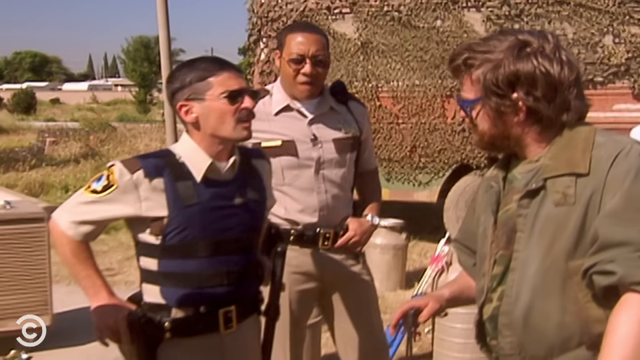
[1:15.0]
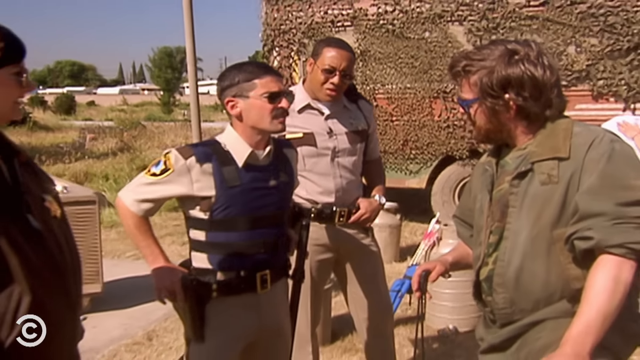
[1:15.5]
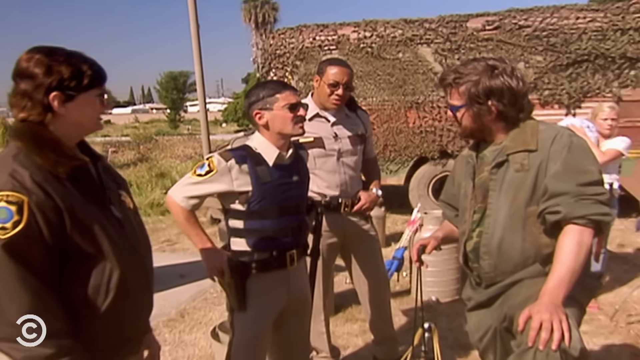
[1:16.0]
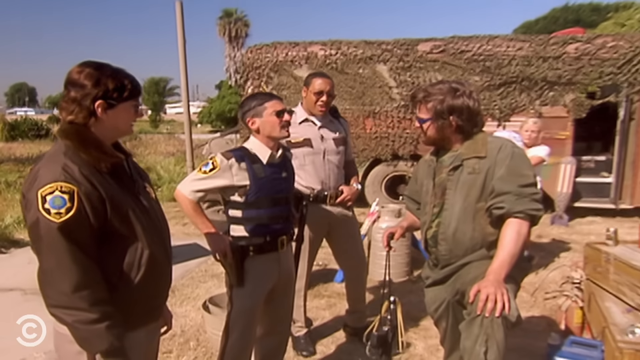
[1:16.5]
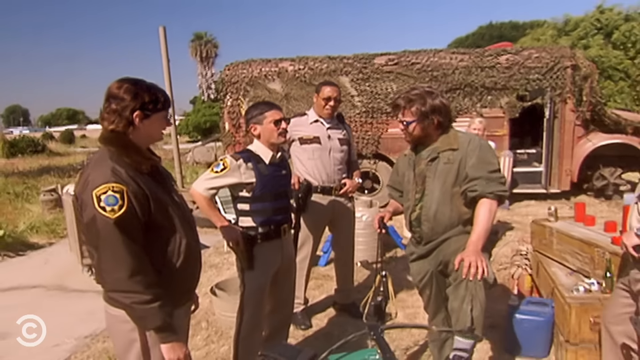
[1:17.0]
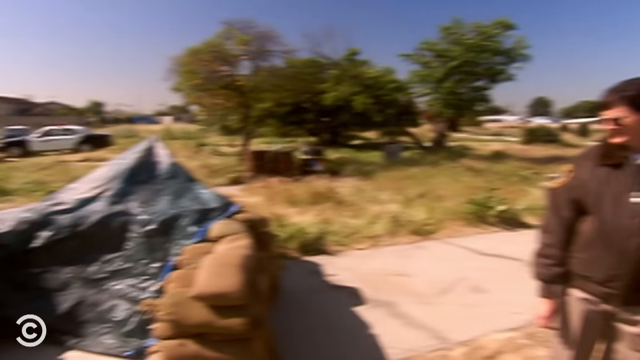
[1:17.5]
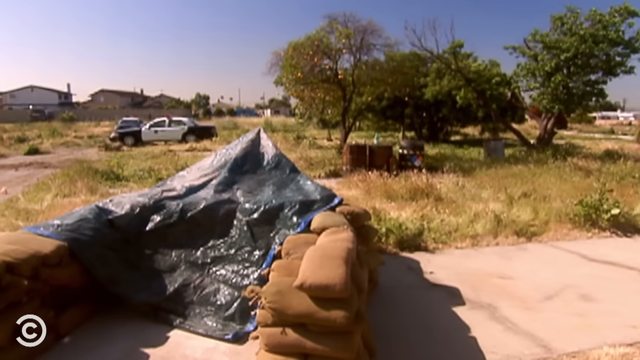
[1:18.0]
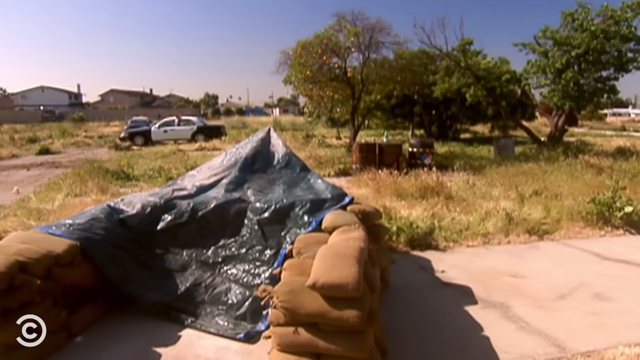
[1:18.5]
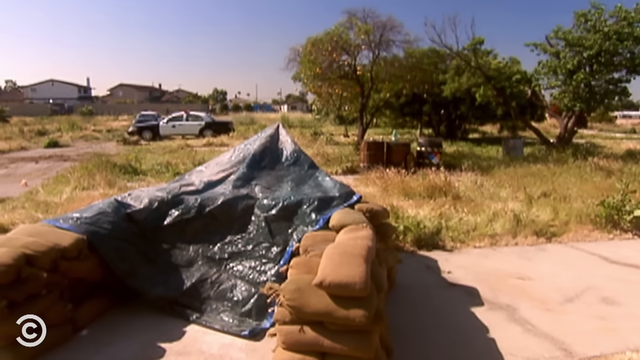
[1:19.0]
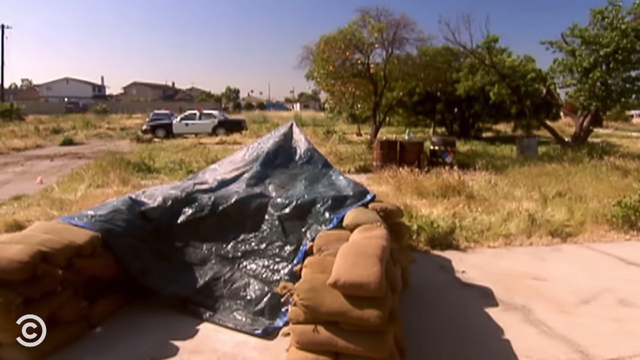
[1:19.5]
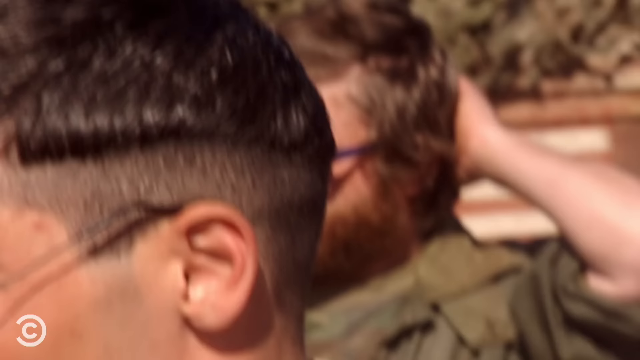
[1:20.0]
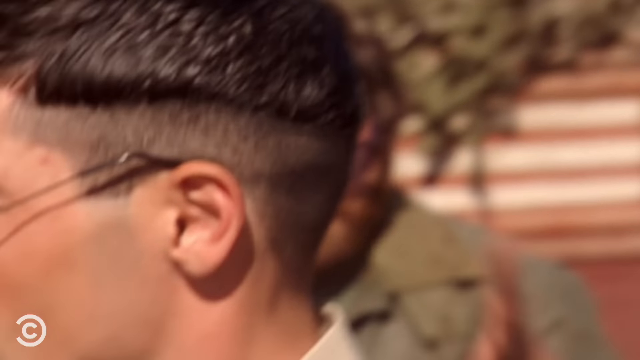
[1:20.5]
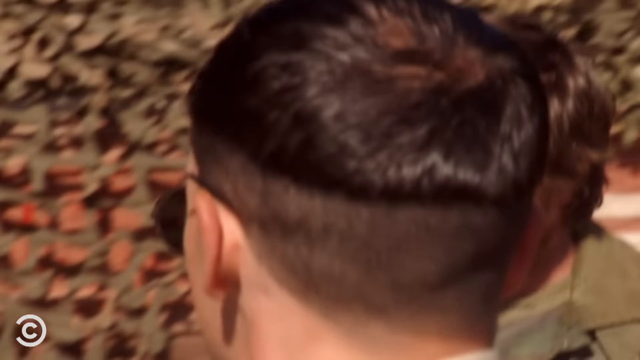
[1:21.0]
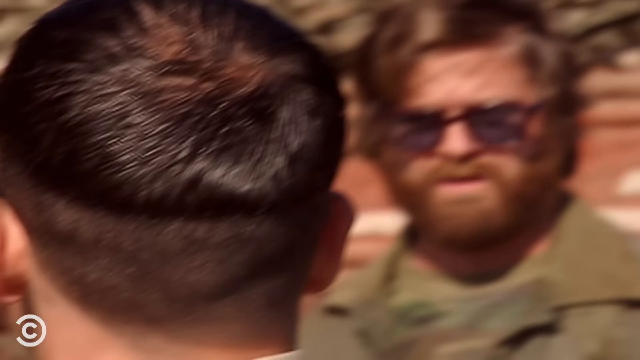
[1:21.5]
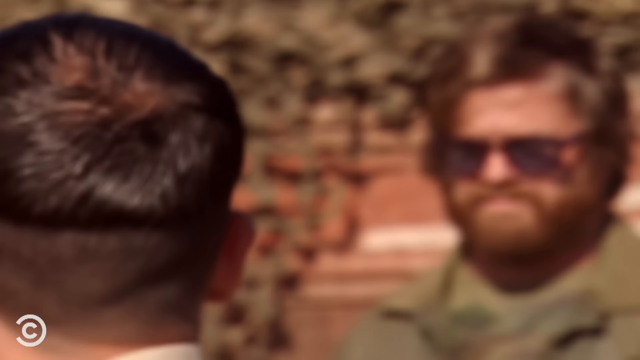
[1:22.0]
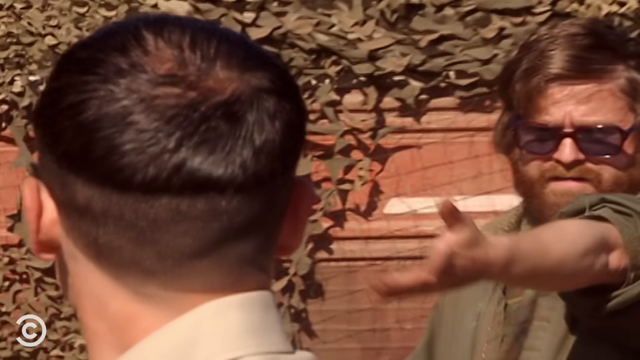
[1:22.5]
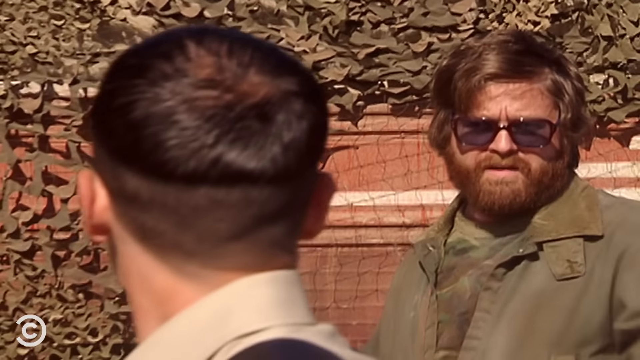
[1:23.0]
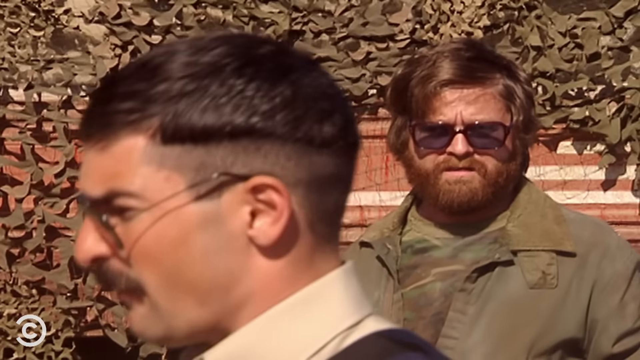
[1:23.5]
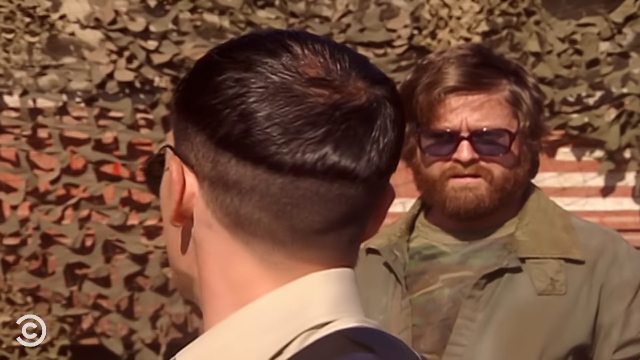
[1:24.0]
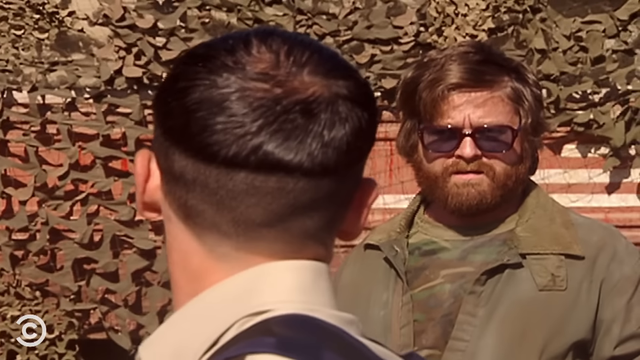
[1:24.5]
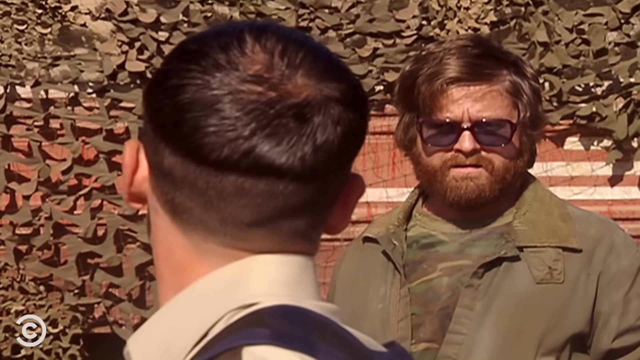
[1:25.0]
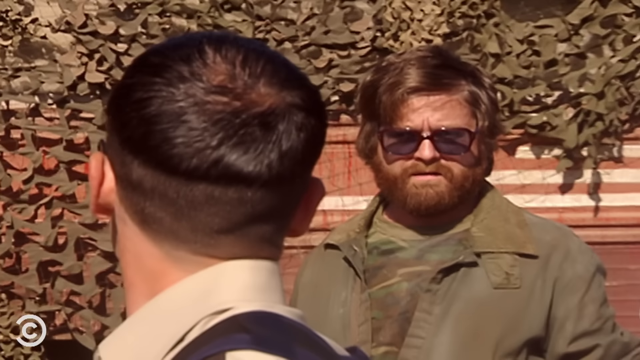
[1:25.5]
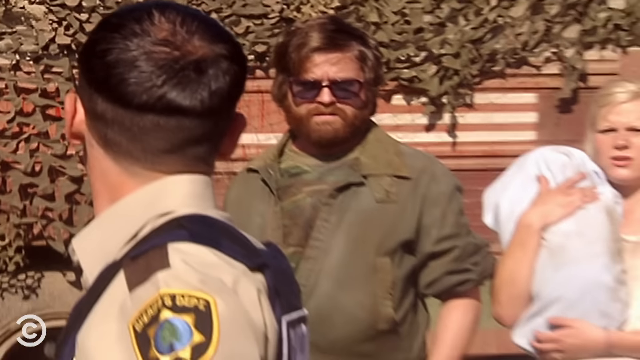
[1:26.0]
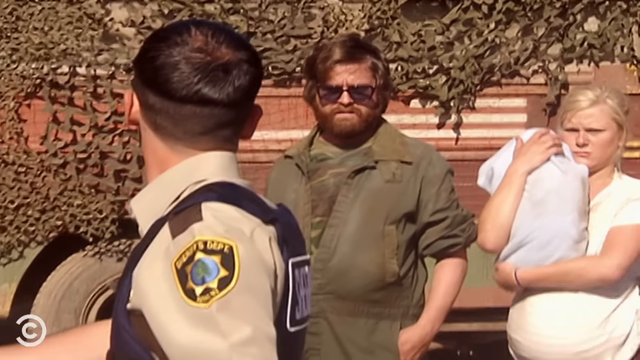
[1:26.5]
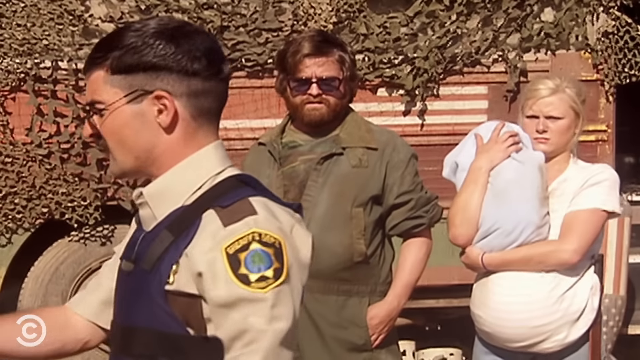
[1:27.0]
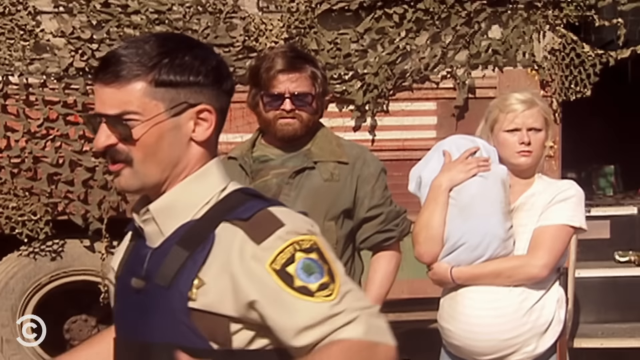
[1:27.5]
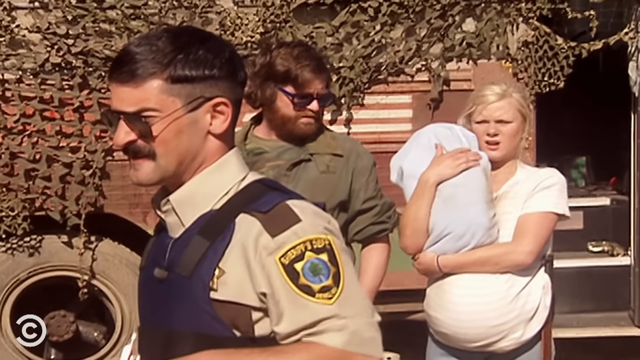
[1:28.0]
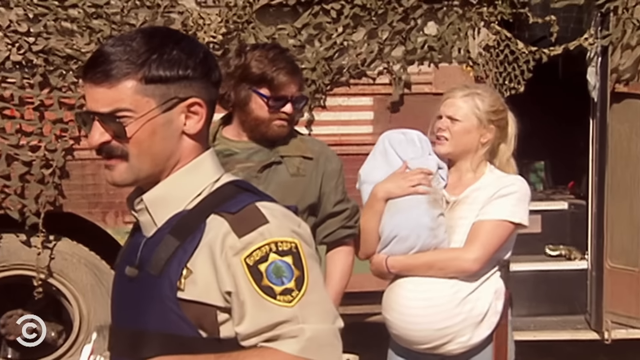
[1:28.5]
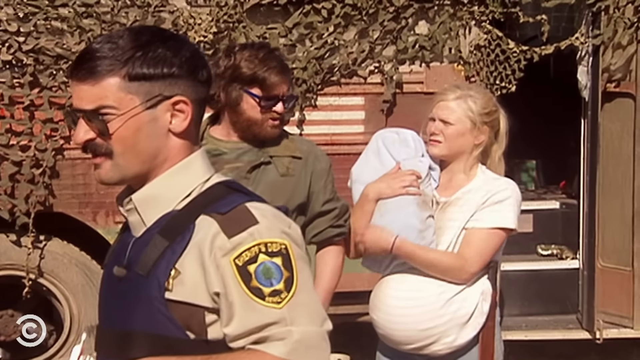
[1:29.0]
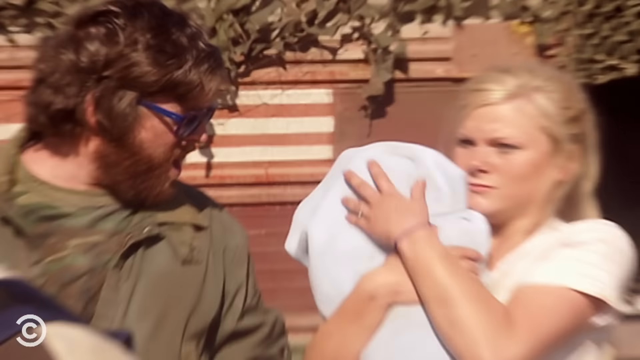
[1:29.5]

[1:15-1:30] A shot shows three of the cops and the guy in the jumpsuit, then pans over to two cement bag barricades with a tarp covering something between them. It pans back to the people, and the guy in the jumpsuit sort of gestures his hand toward it with an irritated look on his face. A cop in front of him also gestures toward it; they seem to be talking about what is under the tarp. The pregnant woman is now closer, standing right next to the guy in the jumpsuit and watching the interaction. She looks at him, apparently her boyfriend, talks to him and shrugs.